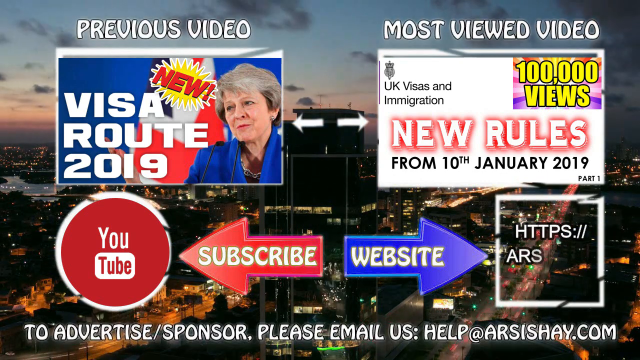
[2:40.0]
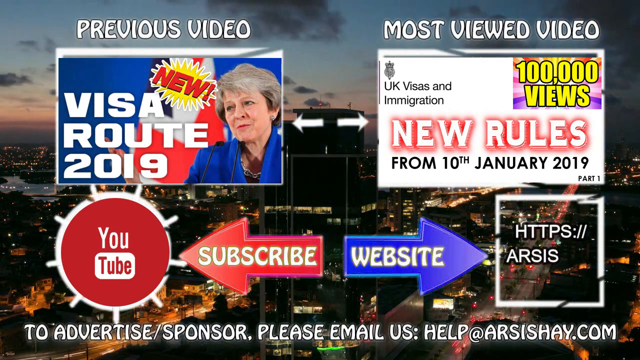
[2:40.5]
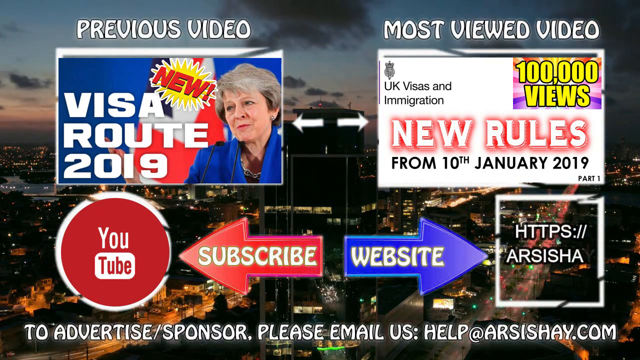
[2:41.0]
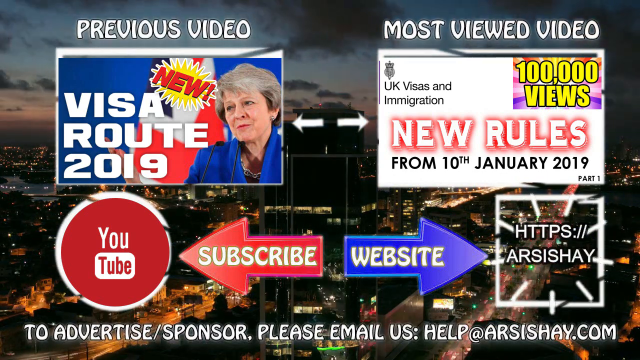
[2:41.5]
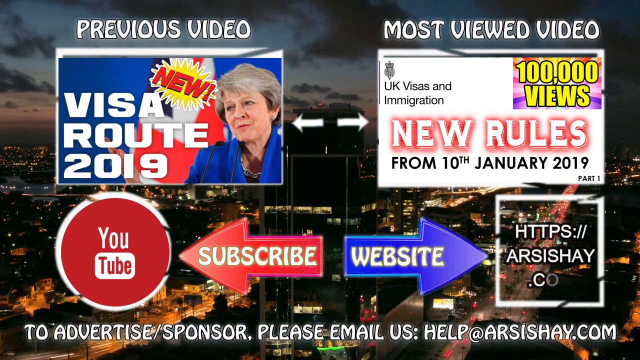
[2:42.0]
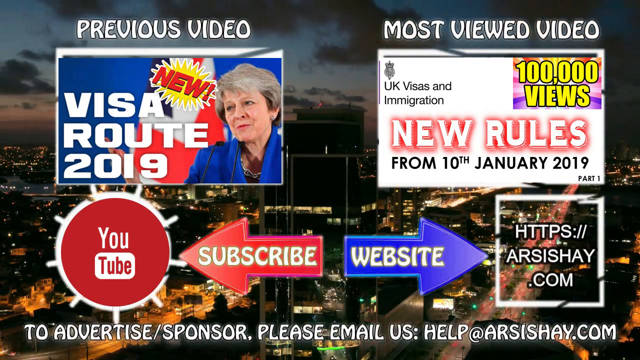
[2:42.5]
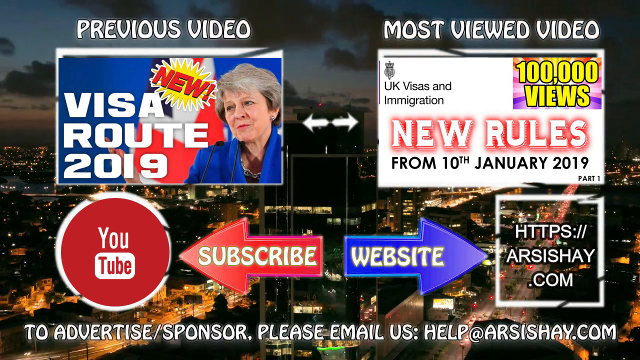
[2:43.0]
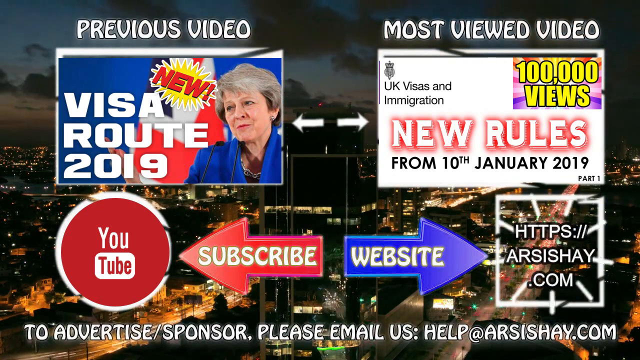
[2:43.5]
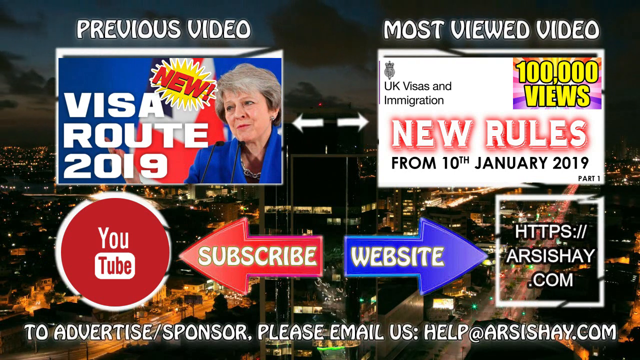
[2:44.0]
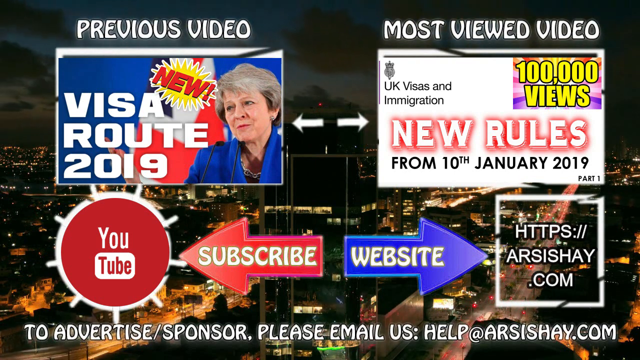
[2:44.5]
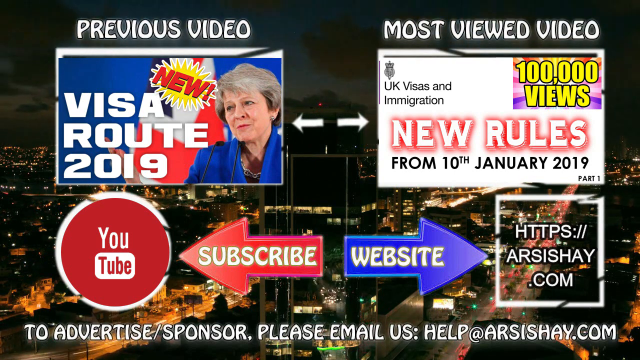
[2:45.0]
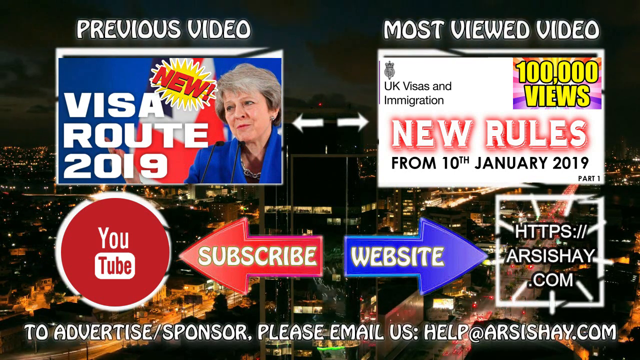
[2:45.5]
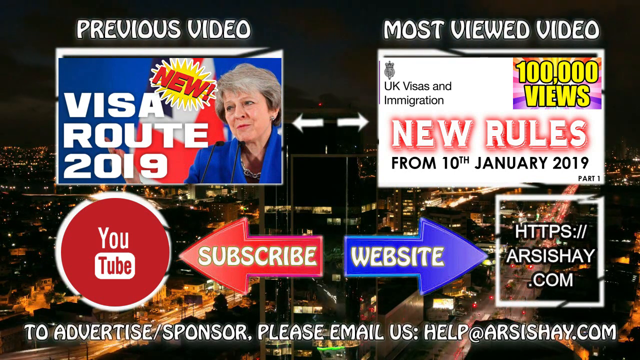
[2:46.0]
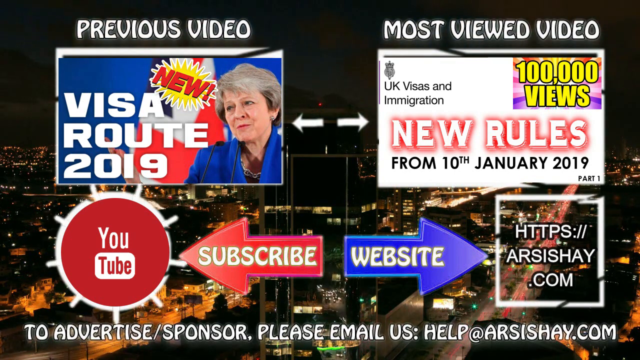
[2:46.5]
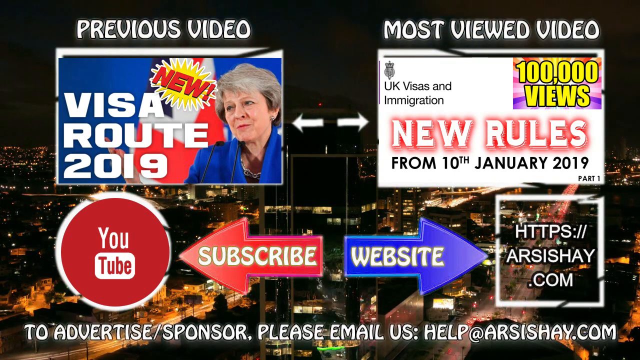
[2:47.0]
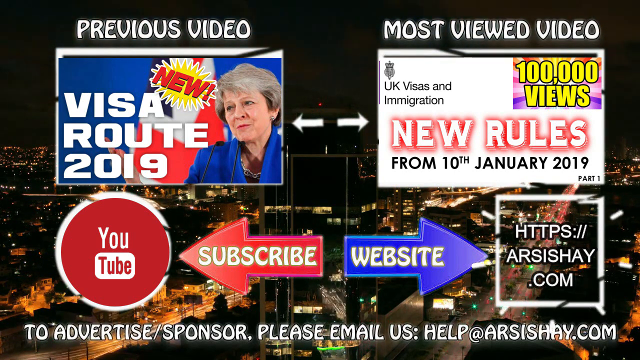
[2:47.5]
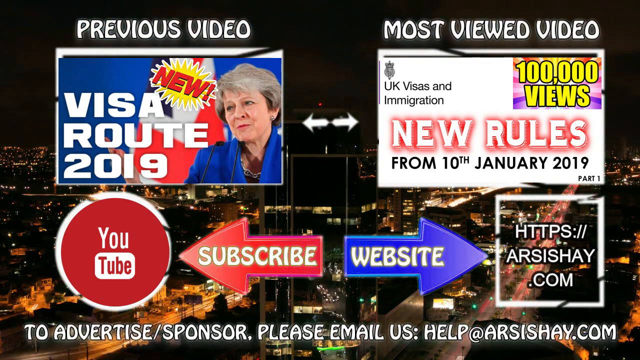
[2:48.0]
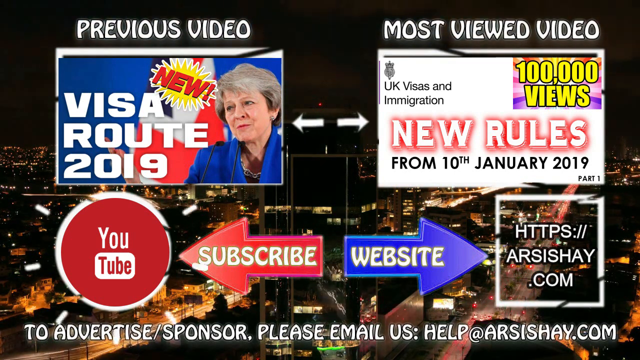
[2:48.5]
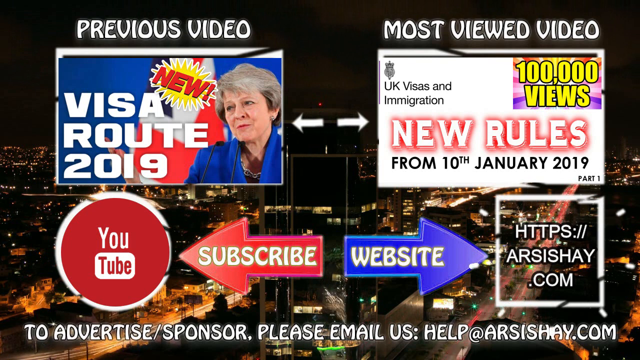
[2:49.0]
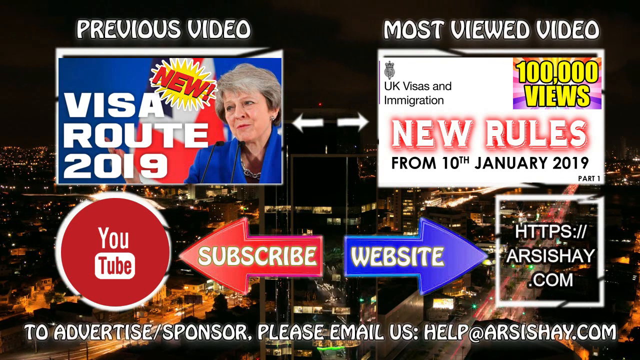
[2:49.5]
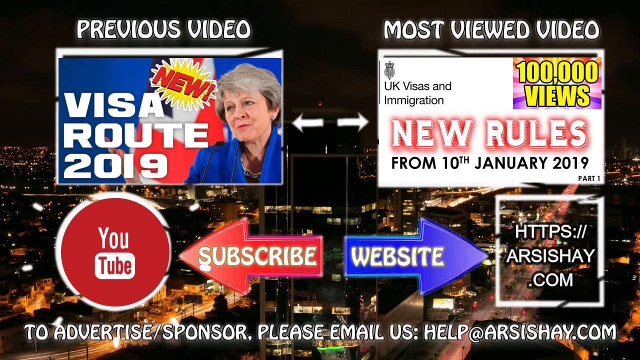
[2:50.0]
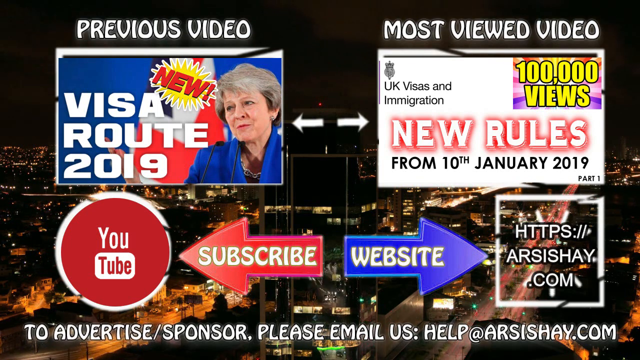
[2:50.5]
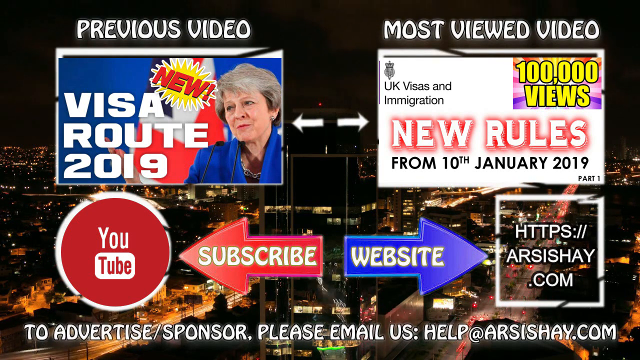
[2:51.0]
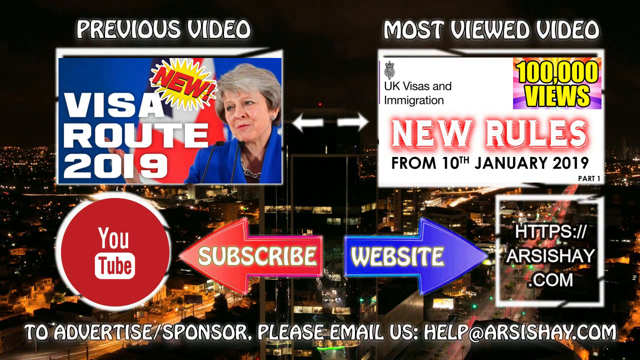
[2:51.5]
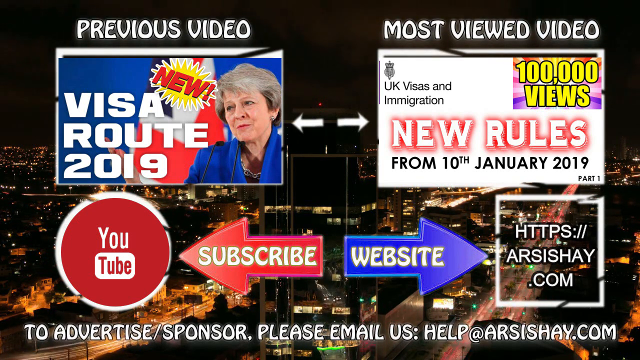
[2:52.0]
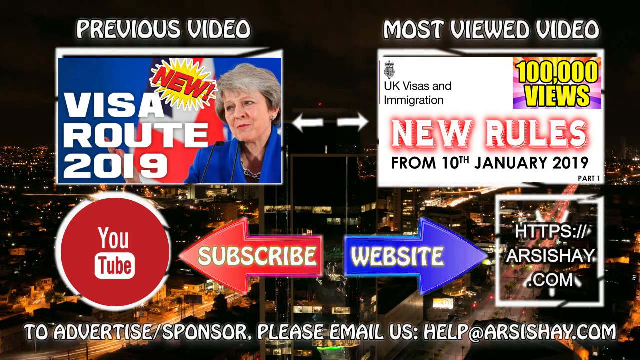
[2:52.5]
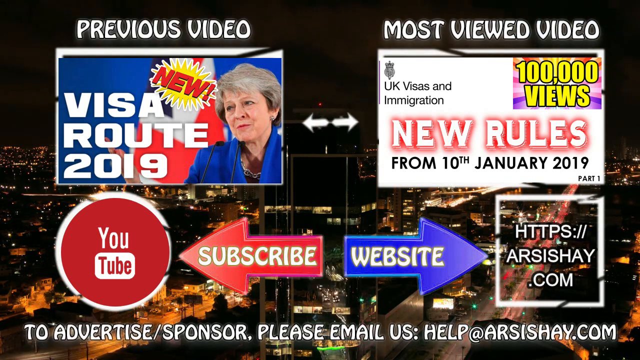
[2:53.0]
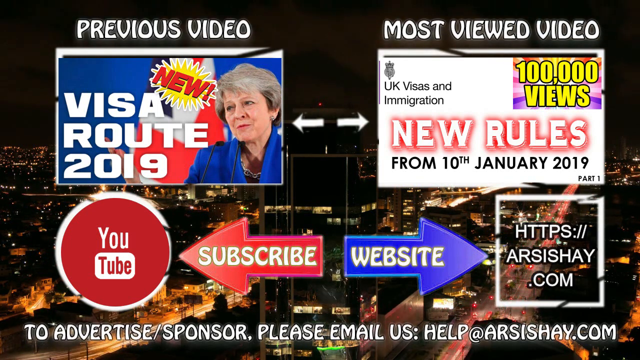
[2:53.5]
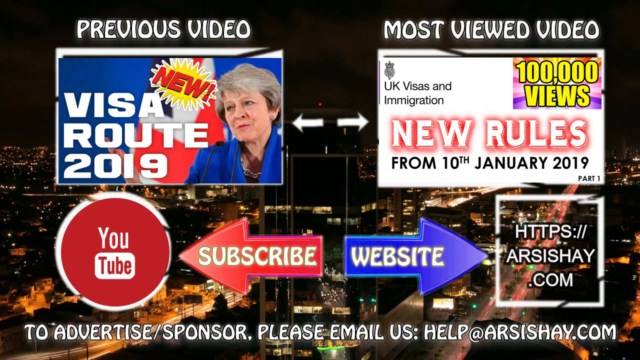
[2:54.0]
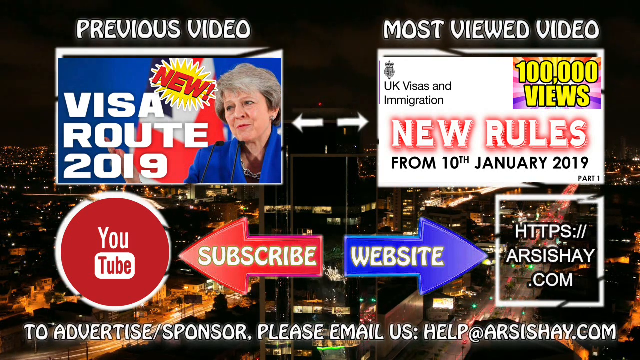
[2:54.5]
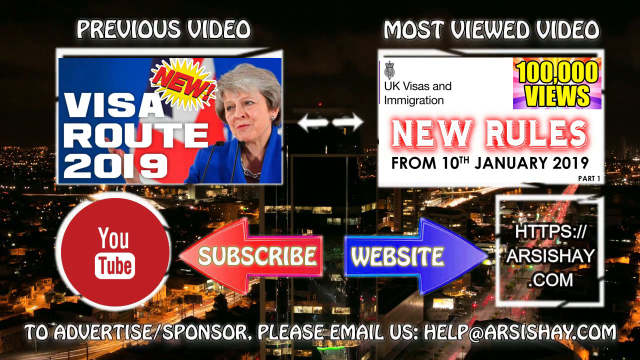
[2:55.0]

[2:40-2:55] The ending graphic has a black background with a night cityscape behind, and fast-motion traffic at the bottom with lots of lights and movement. The upper left is titled "Previous Video" and the right says "Most Viewed Video." Under "Previous Video" it says "Visa Route 2019" and shows an older woman with gray hair and a blue jacket against a red and blue background, with a starburst in the middle and angled red letters reading "New." The right graphic has a white text box on its right side with "New Rules" in all caps with a red, shadowy outline; above and to its right, yellow text reads "100,000 views"; to the left, black text reads "UK Visas and Immigration"; and under "New Rules," black text reads "from 10th January 2019." Beneath the woman, at the lower left, is a very large red circle reading "YouTube," with "Tube" in a white text box. To its right, a red arrow points to the circle with "Subscribe" in white all caps. Further right is a blue arrow pointing right with "Website" inside it, and to the right of the blue arrow is a white outline box with a website in white caps in its middle.